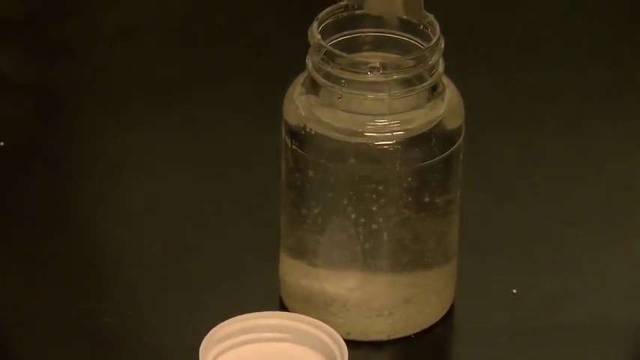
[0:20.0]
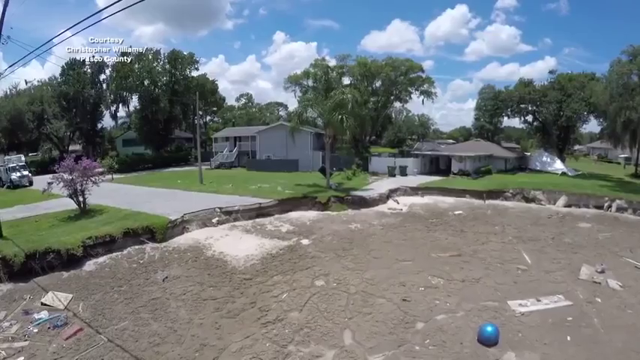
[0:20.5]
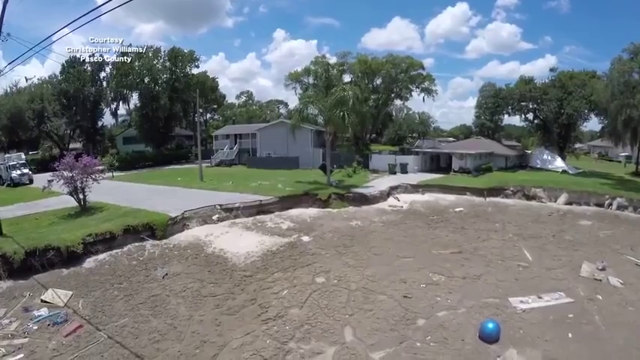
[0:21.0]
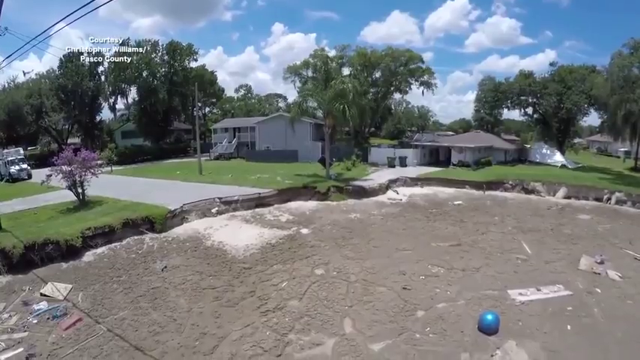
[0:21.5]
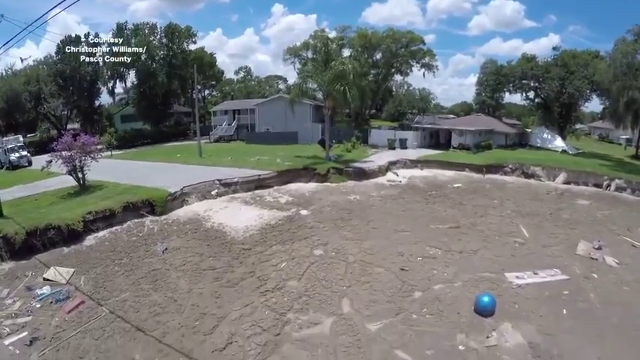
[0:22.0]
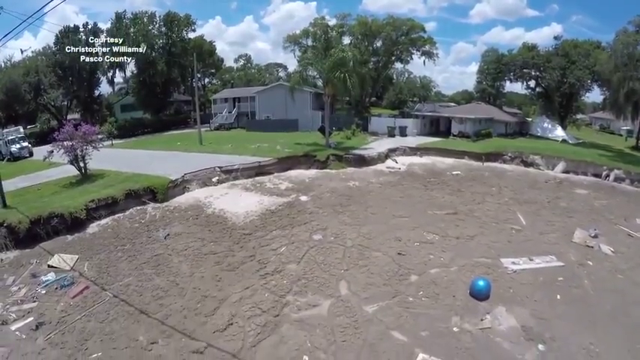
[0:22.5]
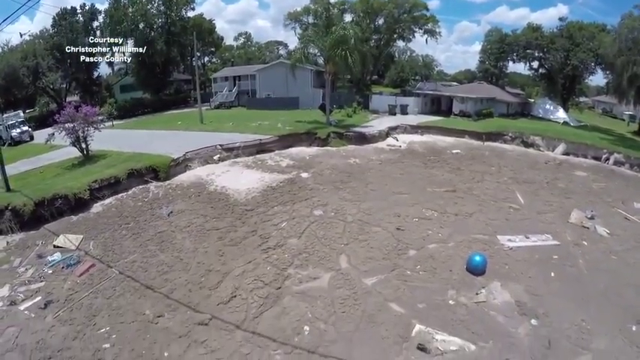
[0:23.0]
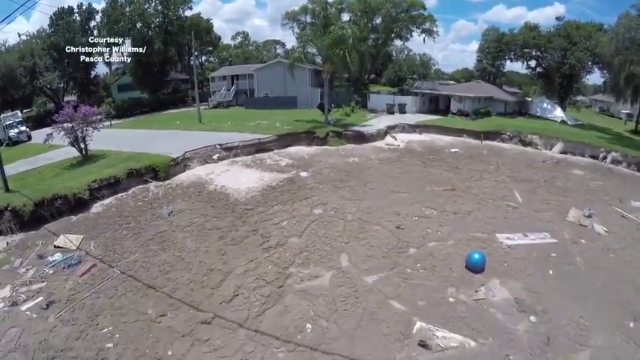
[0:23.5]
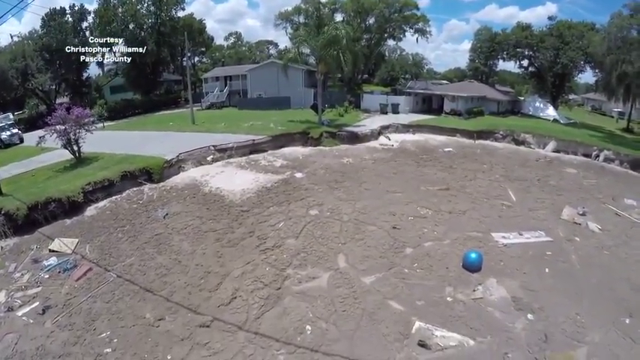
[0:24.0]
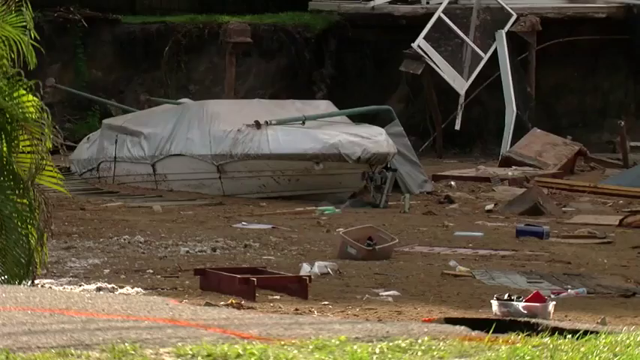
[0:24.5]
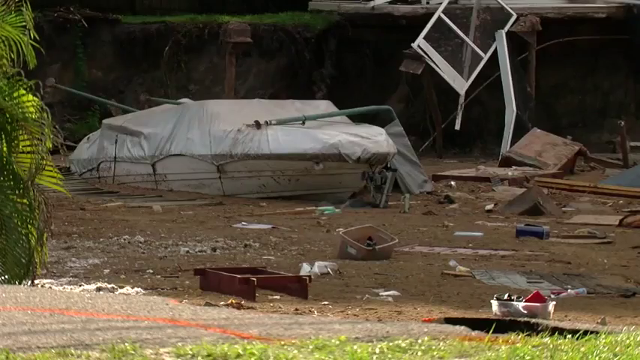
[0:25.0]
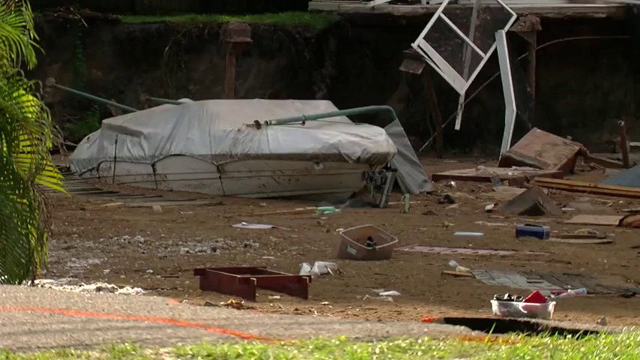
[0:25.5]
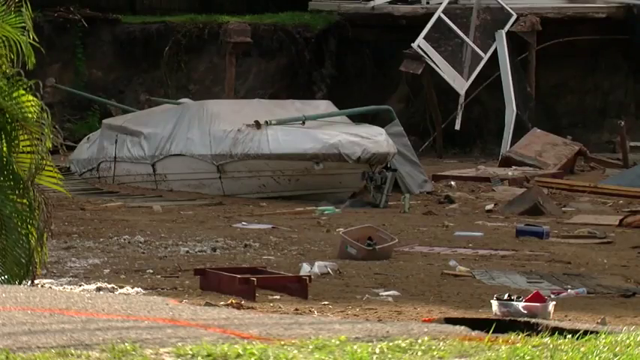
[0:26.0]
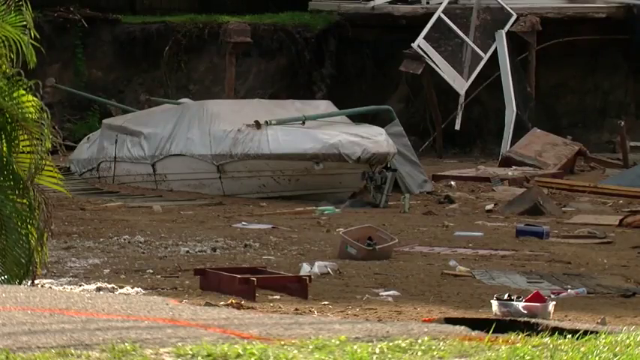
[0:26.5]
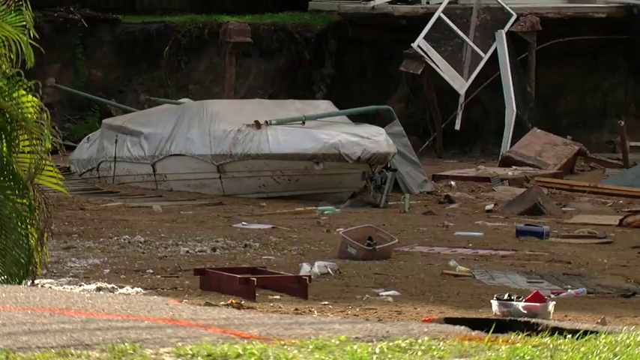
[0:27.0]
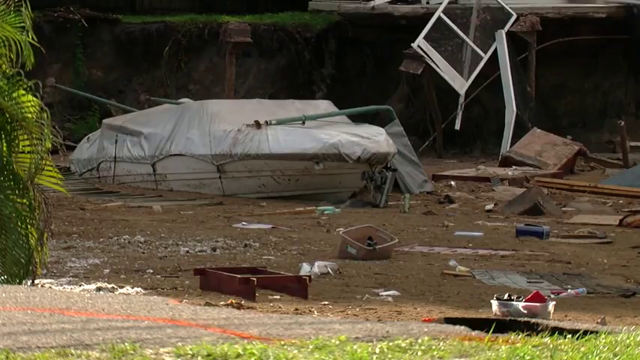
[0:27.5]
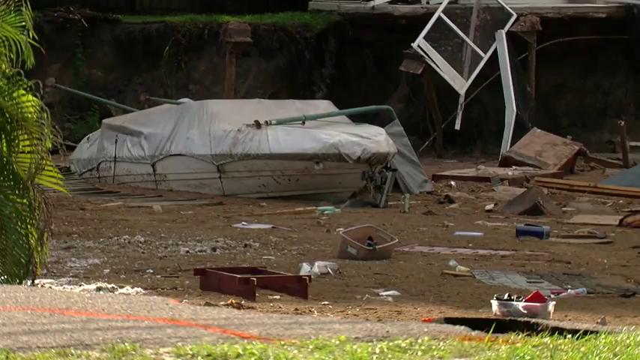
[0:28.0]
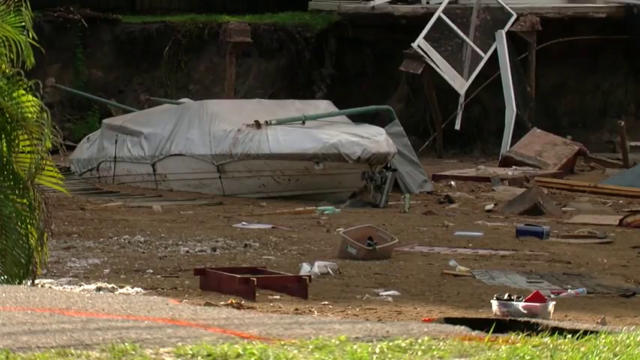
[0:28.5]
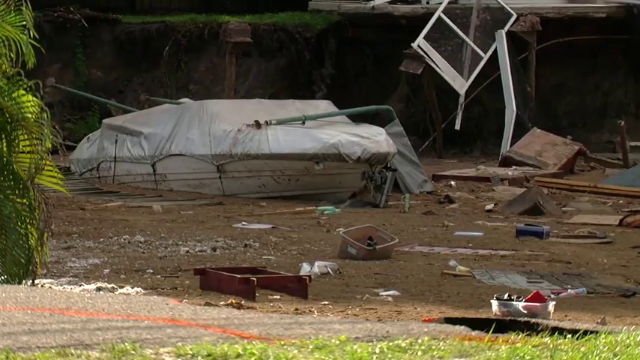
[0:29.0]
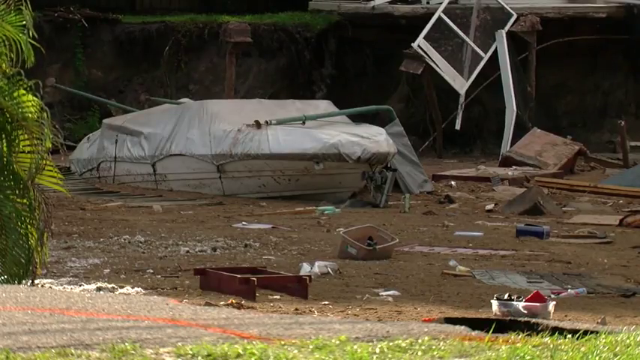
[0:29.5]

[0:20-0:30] A restricted area that people are not allowed to enter is shown. A woman closes a cabinet, and there is a bottle of water into which a substance is being poured. The place is destroyed, with everything left stranded and brought down.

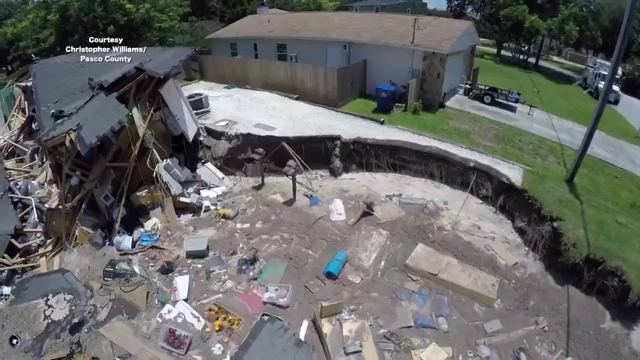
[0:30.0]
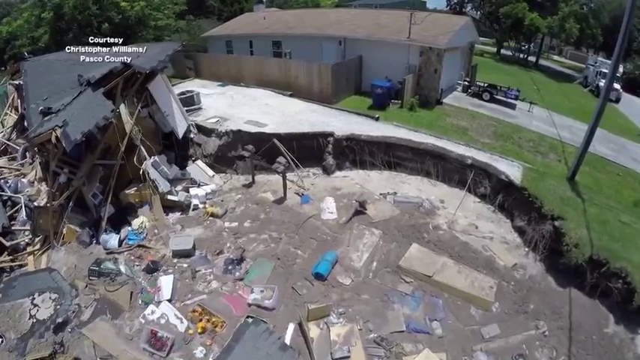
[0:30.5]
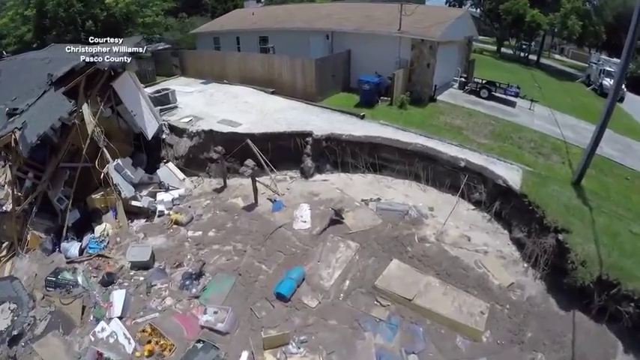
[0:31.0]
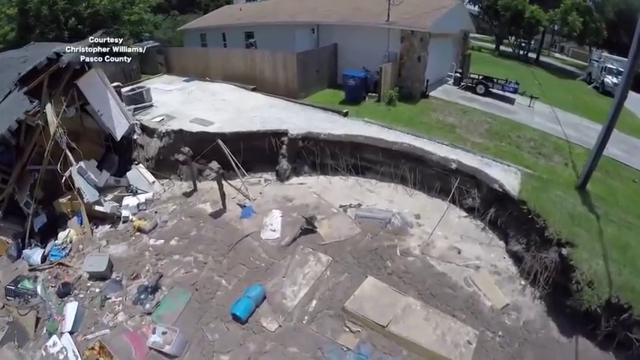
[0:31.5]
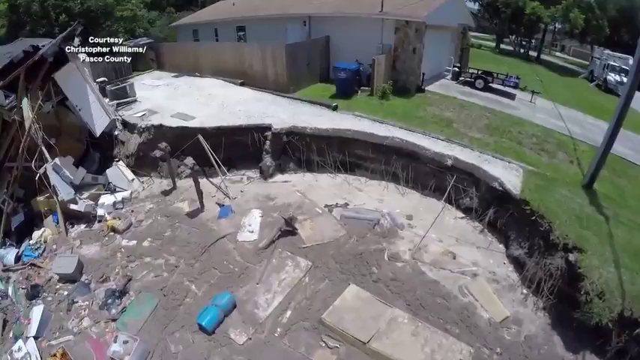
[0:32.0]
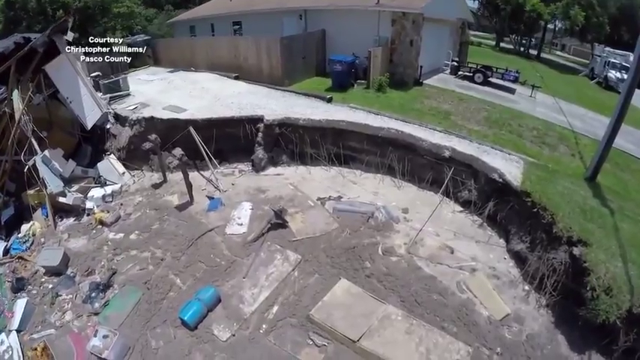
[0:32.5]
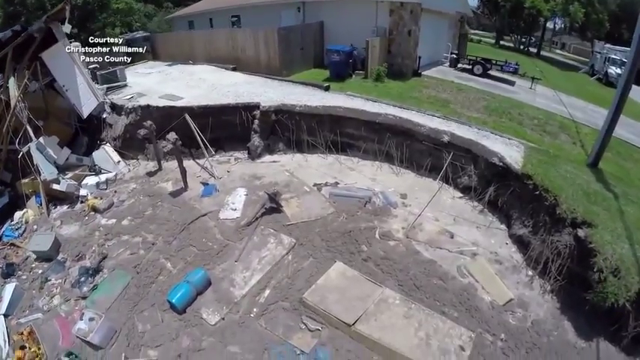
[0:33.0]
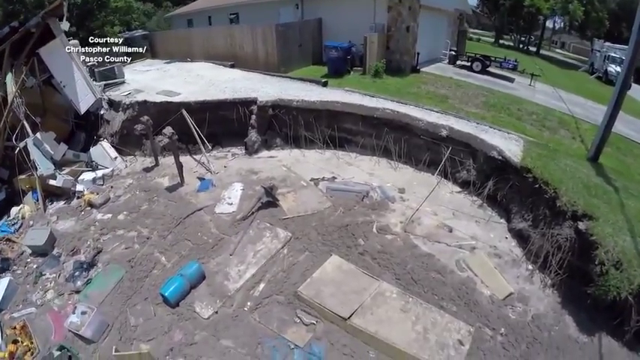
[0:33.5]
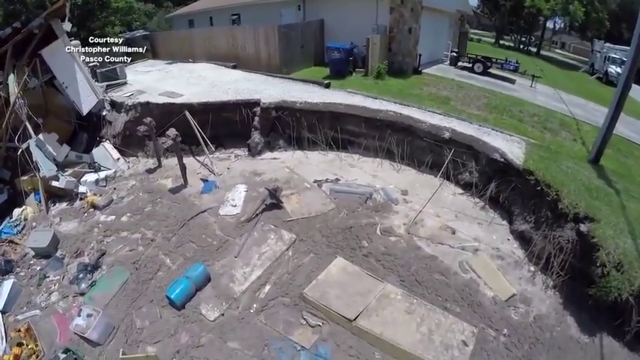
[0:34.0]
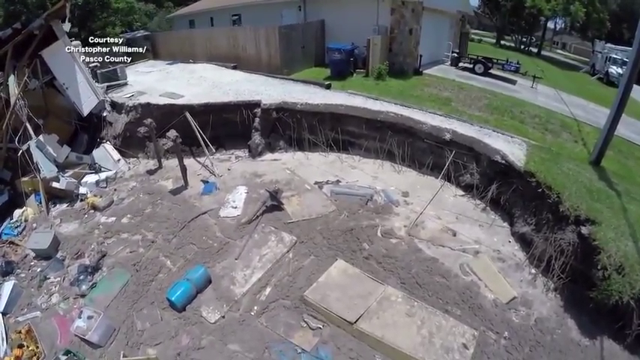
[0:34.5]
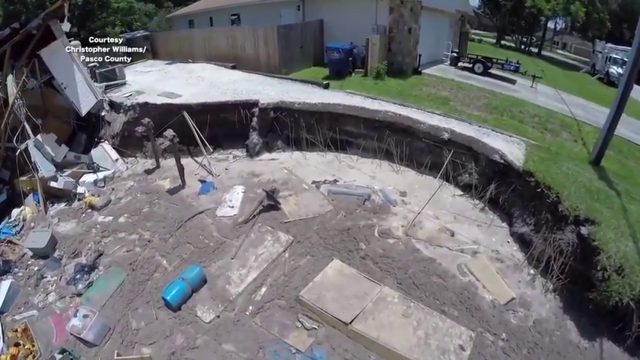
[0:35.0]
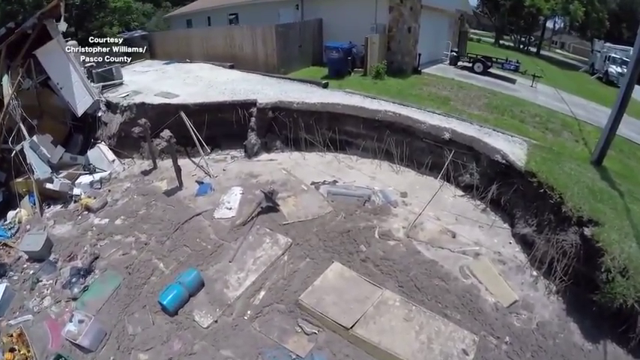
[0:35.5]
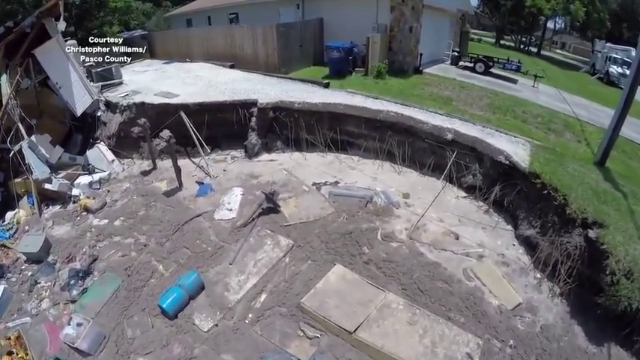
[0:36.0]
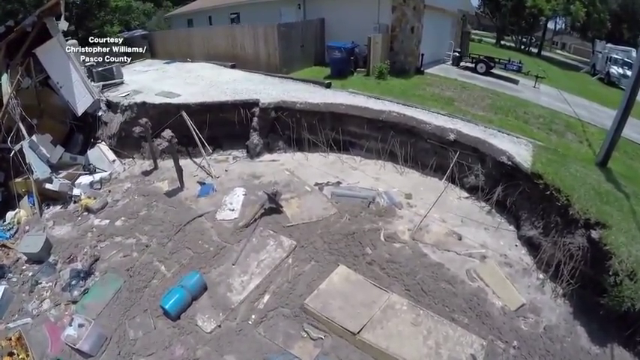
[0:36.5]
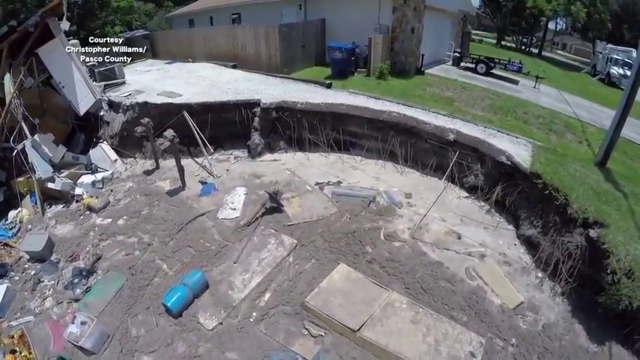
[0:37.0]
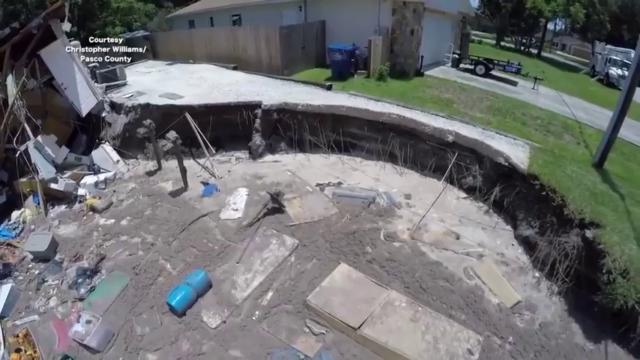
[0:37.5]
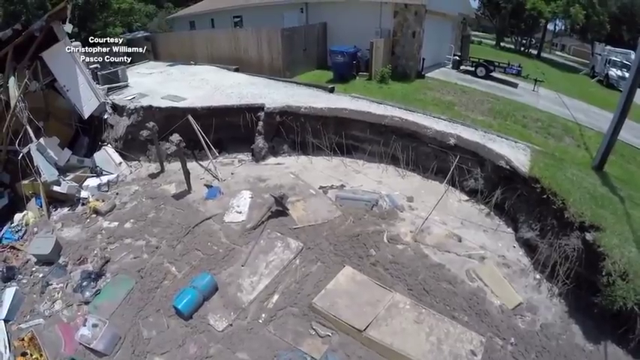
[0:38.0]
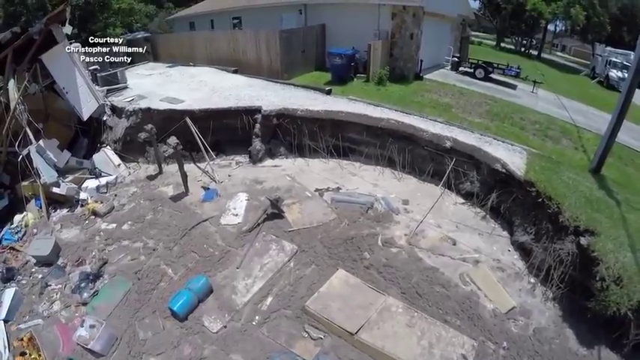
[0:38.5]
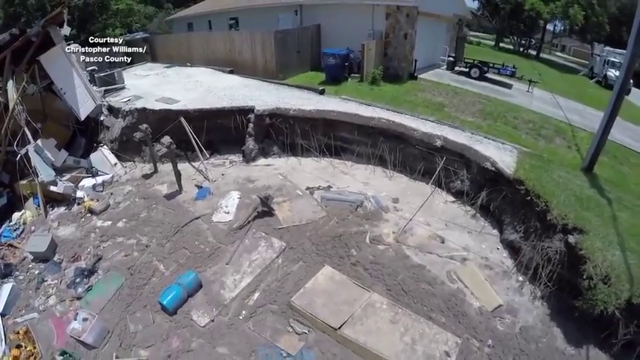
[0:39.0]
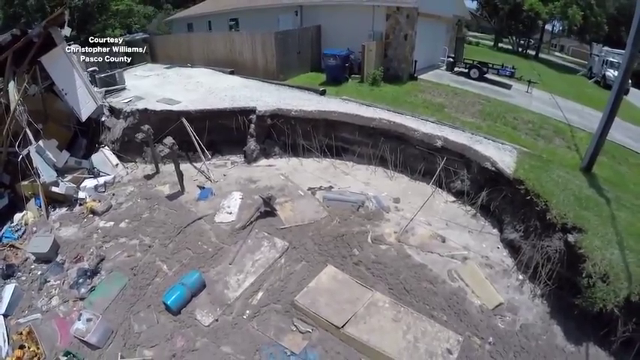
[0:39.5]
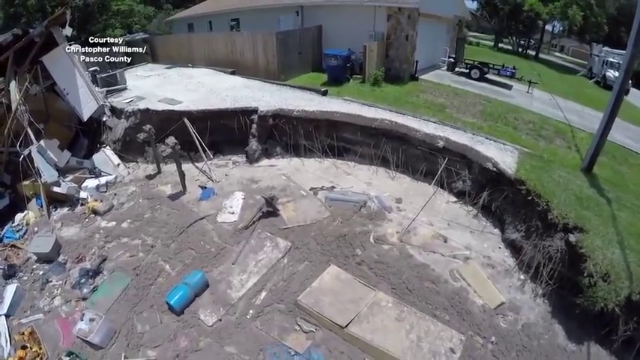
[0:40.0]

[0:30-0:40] A woman closes a cabinet, and there is a bottle of water into which a substance is being poured. The place is destroyed, with everything left stranded.